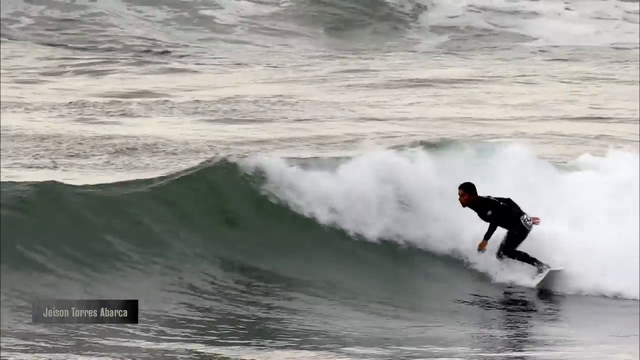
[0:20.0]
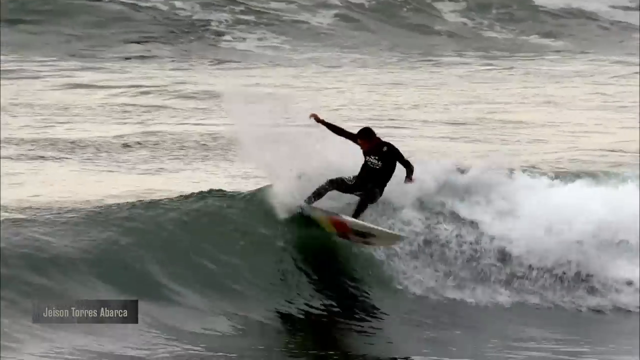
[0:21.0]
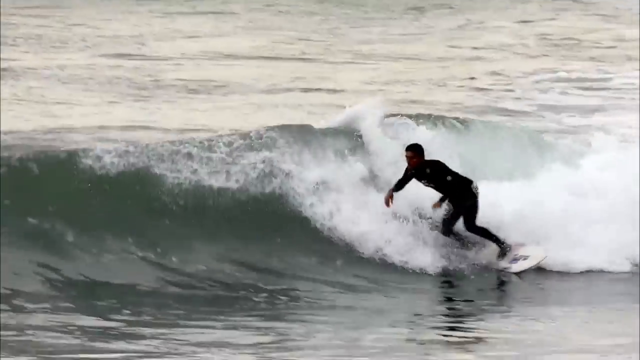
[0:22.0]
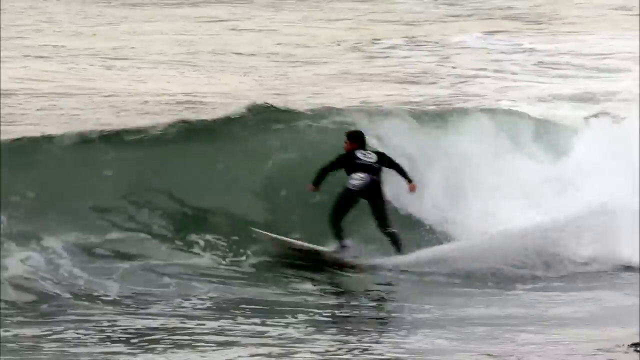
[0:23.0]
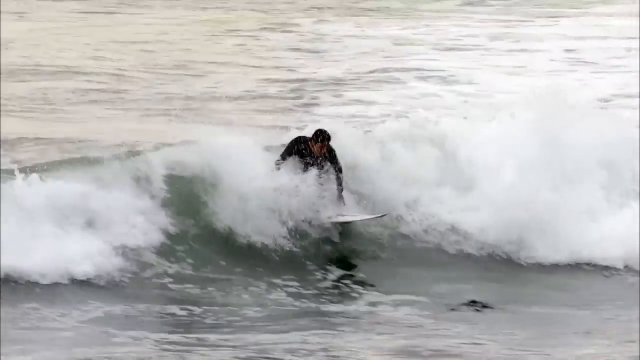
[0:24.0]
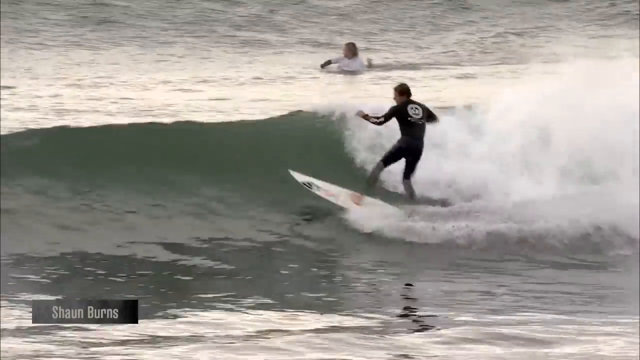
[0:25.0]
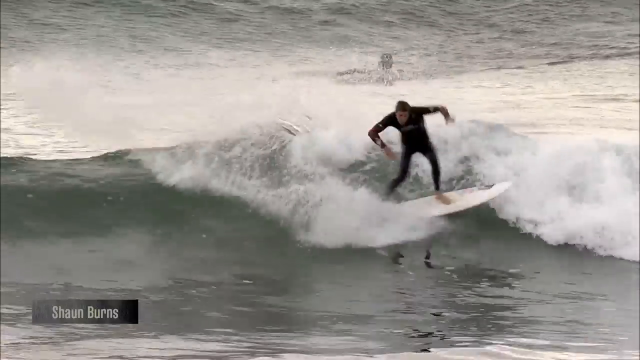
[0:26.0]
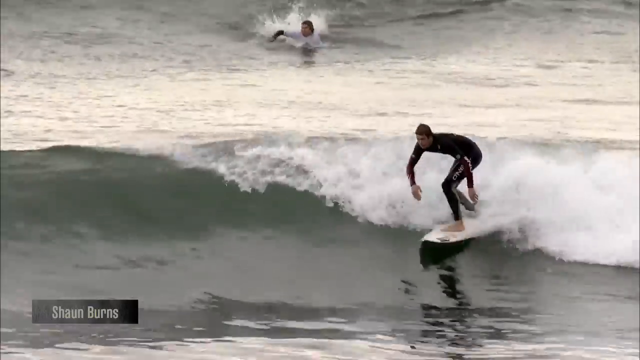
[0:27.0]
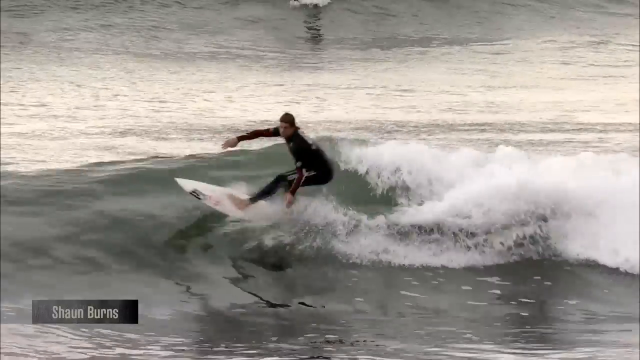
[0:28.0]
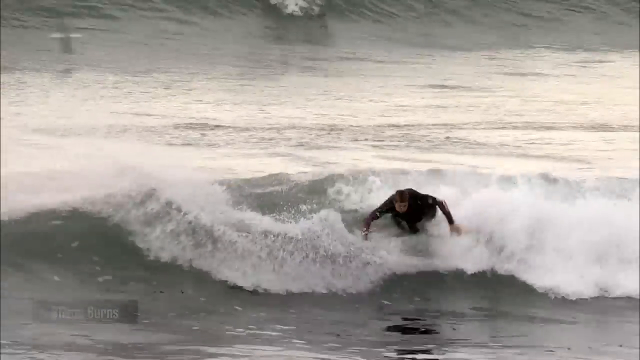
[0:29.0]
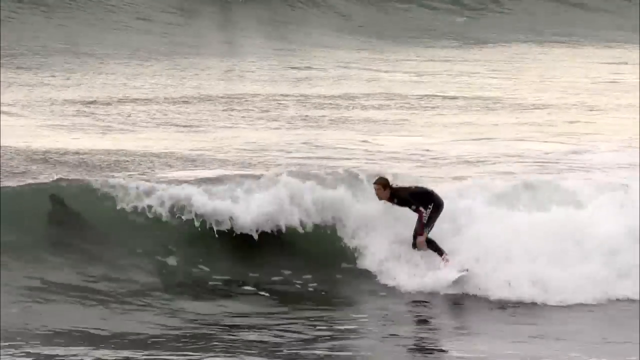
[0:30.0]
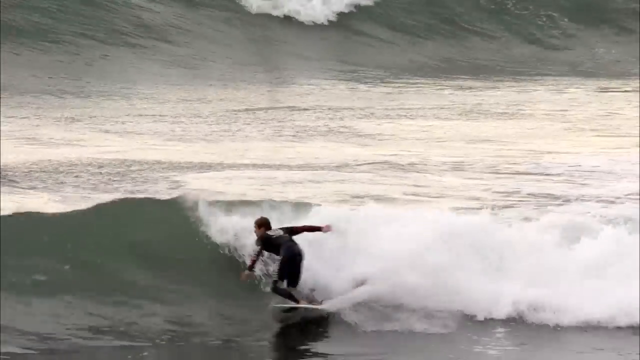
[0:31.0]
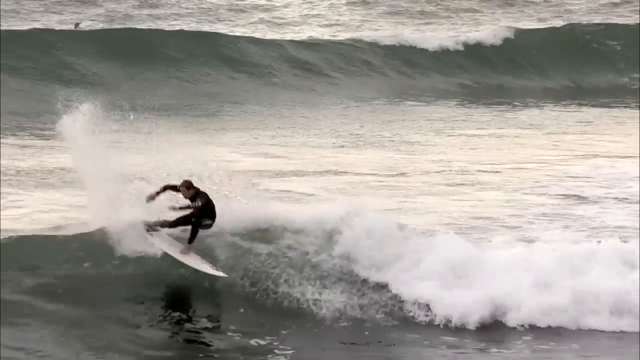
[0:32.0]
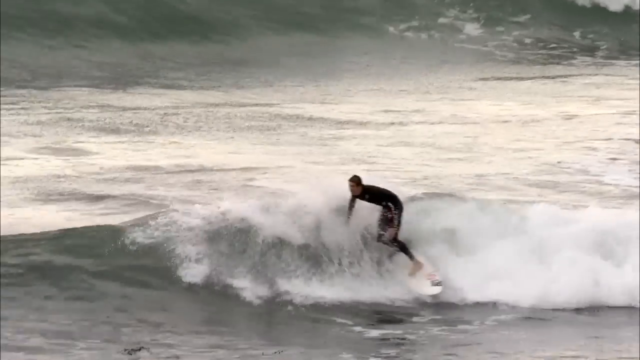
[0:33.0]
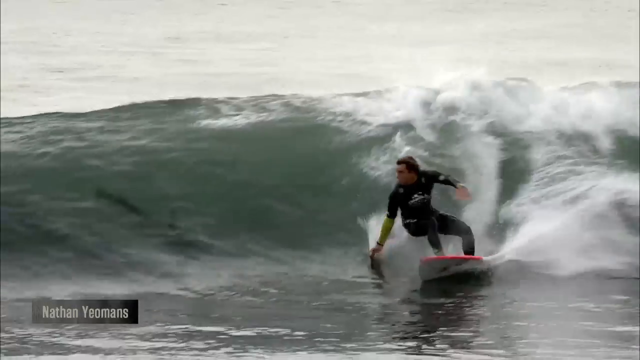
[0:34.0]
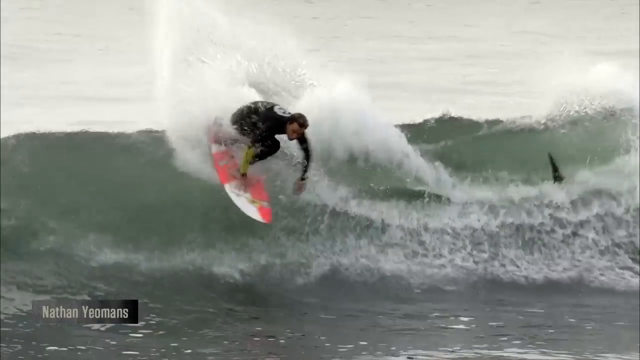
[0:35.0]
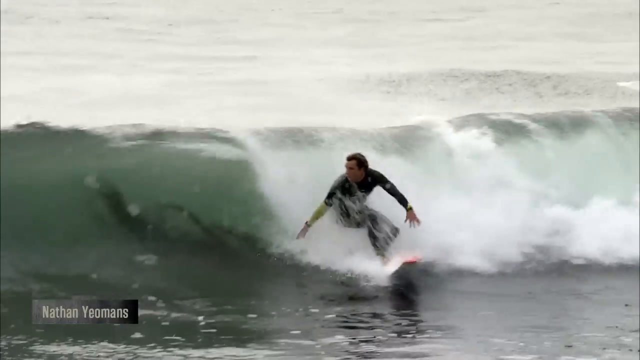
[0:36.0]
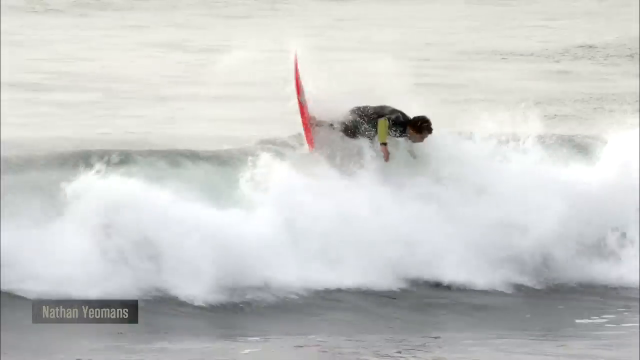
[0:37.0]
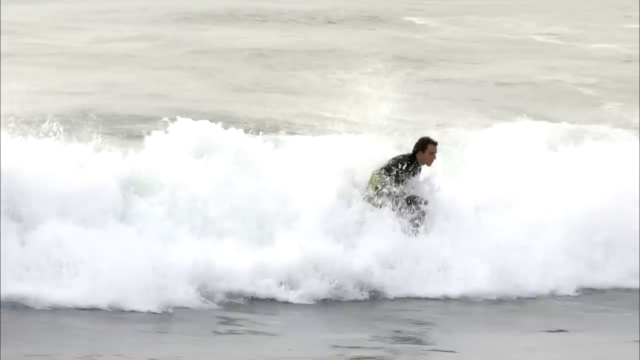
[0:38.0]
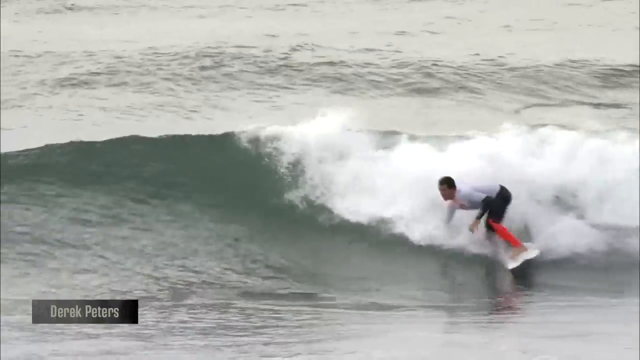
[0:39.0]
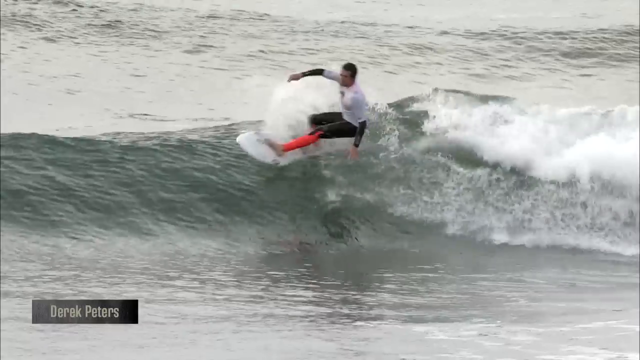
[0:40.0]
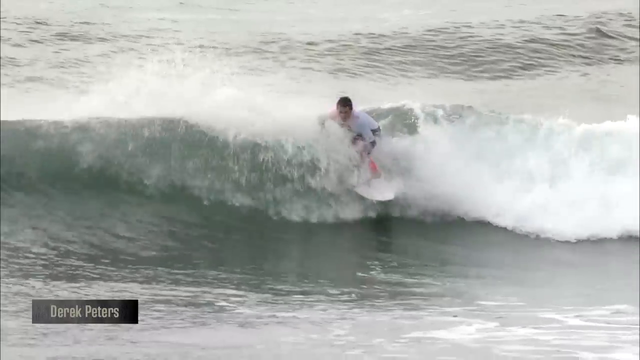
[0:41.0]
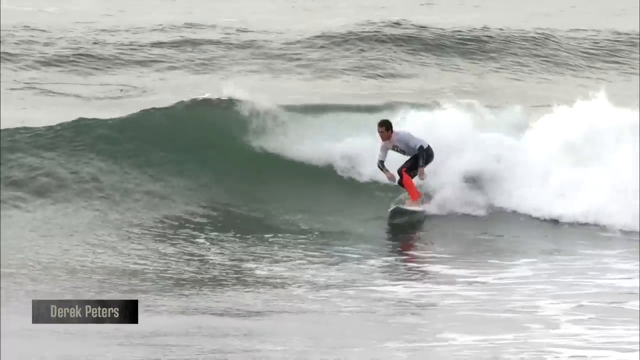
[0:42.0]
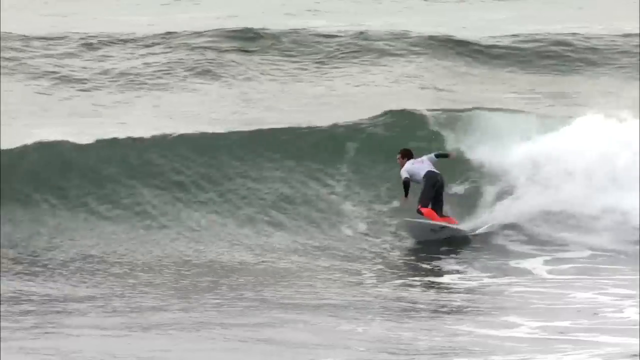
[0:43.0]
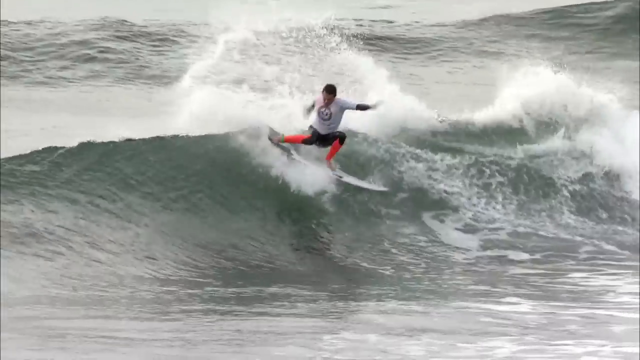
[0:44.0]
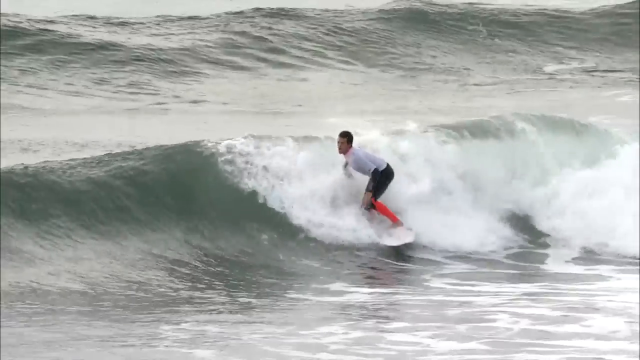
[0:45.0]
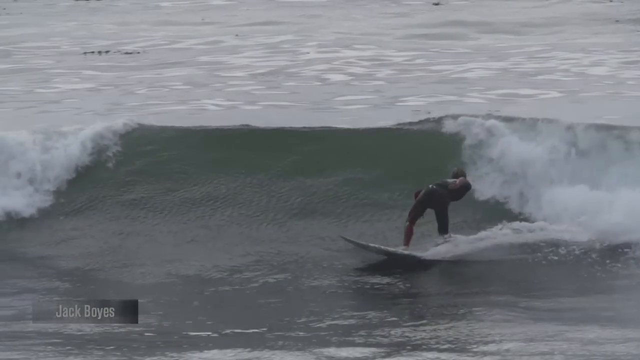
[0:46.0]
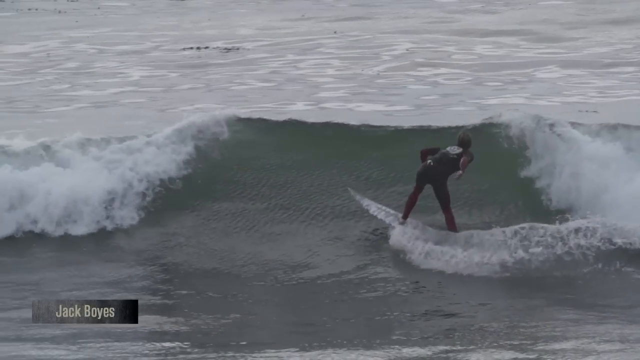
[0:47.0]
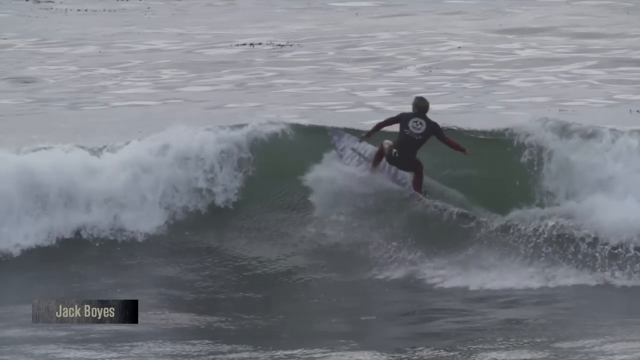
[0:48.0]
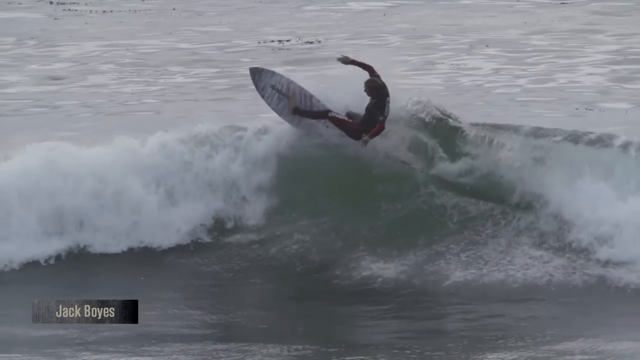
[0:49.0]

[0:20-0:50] An ocean scene shows a surfer riding a wave on a white surfboard. He wears a black or dark top and black or dark shorts. He does a little trick on top of the wave, then another, and continues doing various small maneuvers on the wave. The view switches to another surfer, also in a dark long-sleeve top and dark pants, riding a red and white surfboard and doing tricks on the waves. Next, a different surfer in a white top and black pants rides a white surfboard, doing tricks as he rides the wave. The view then switches to another surfer in slow motion, wearing a black top and black pants; he rides a wave and does a little flip up in the air at the top of the wave.